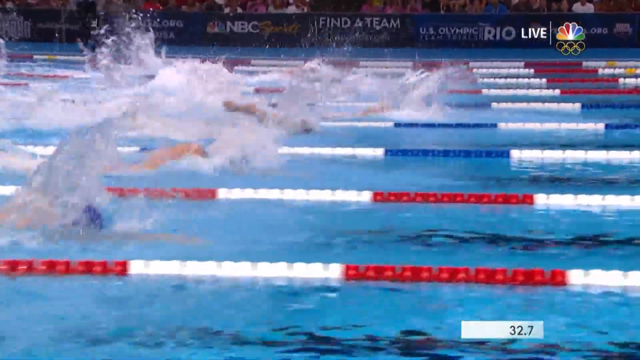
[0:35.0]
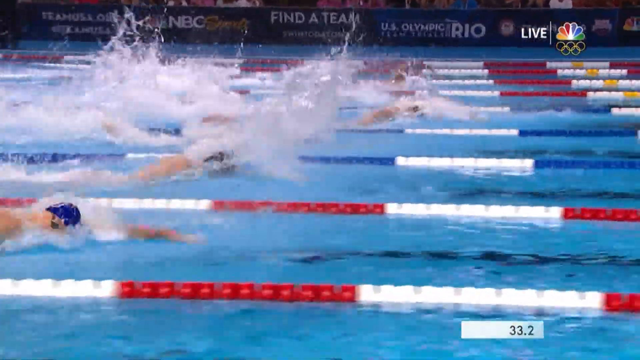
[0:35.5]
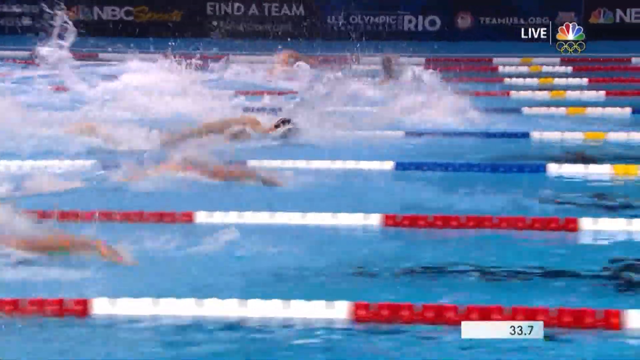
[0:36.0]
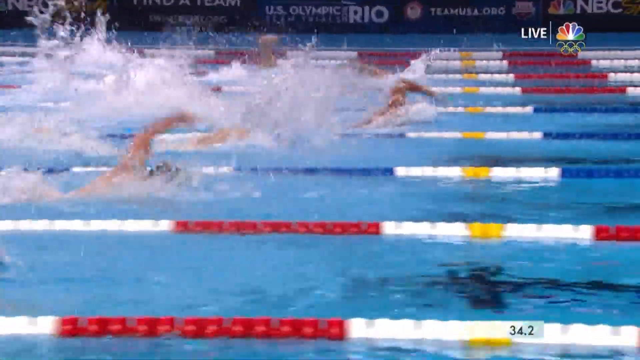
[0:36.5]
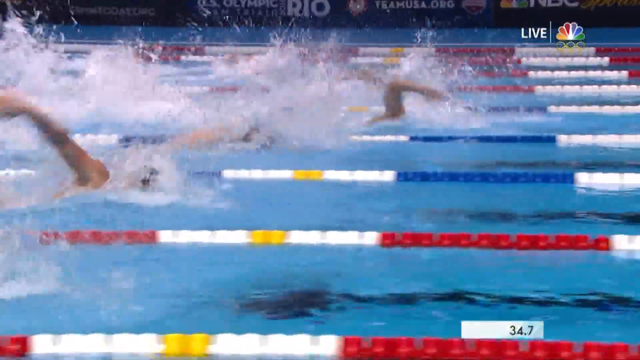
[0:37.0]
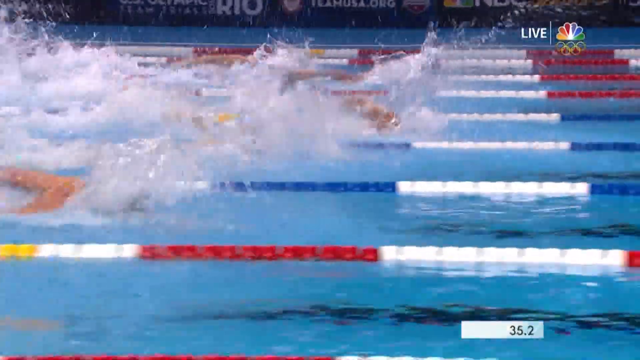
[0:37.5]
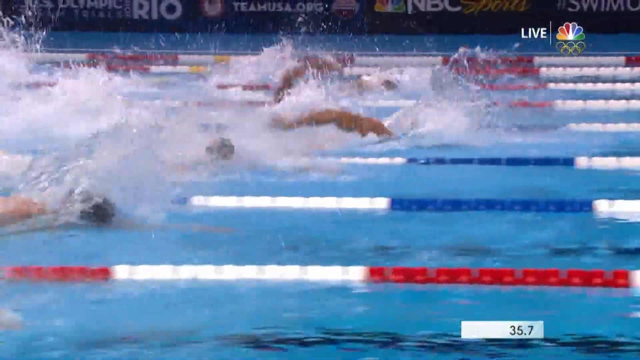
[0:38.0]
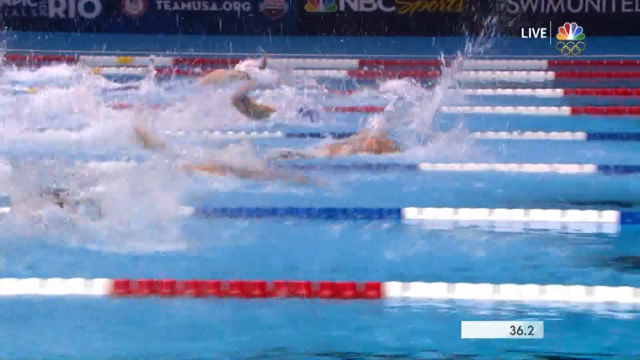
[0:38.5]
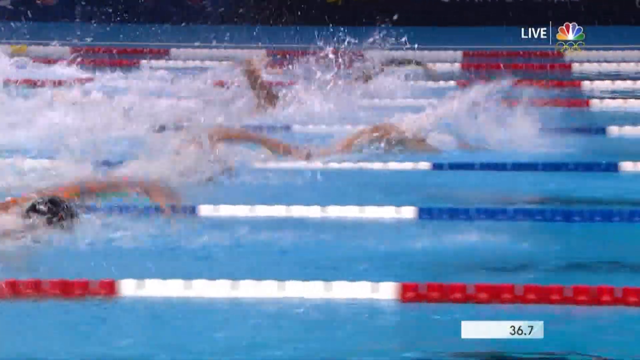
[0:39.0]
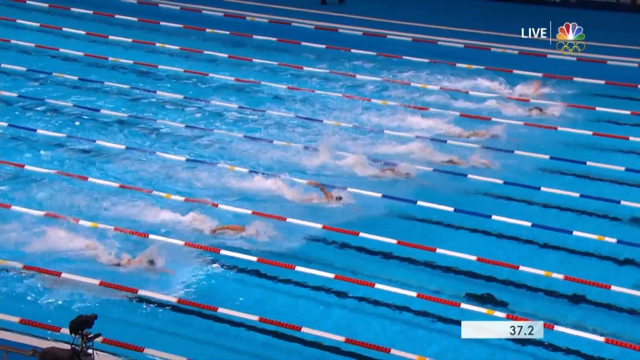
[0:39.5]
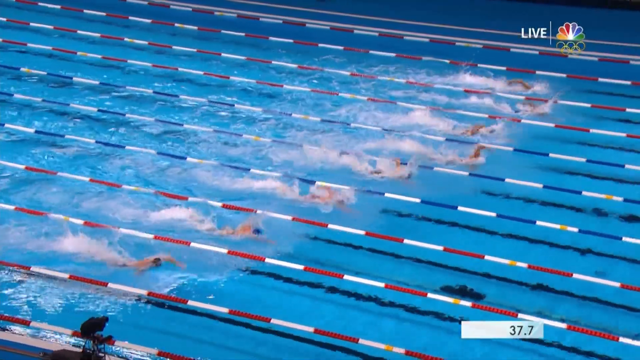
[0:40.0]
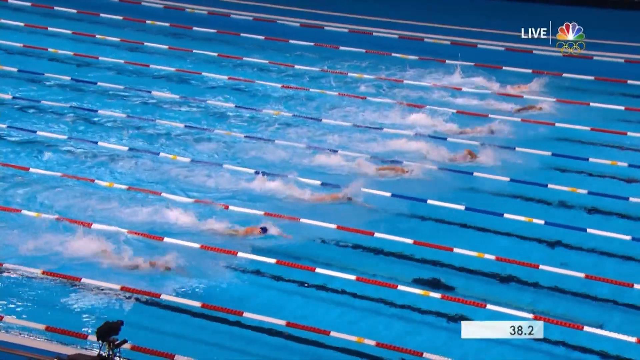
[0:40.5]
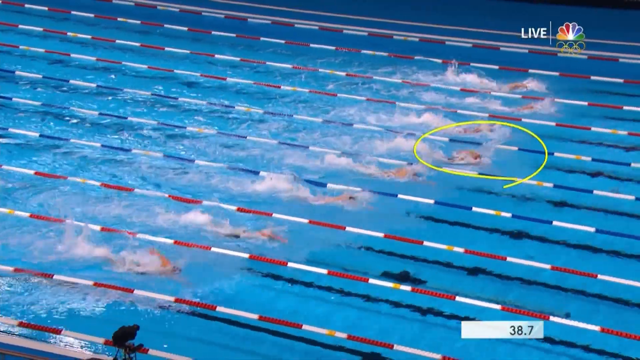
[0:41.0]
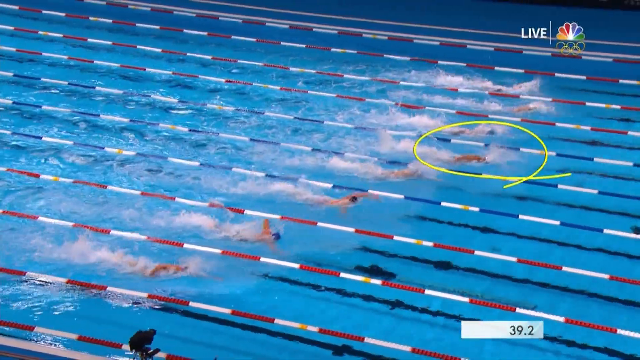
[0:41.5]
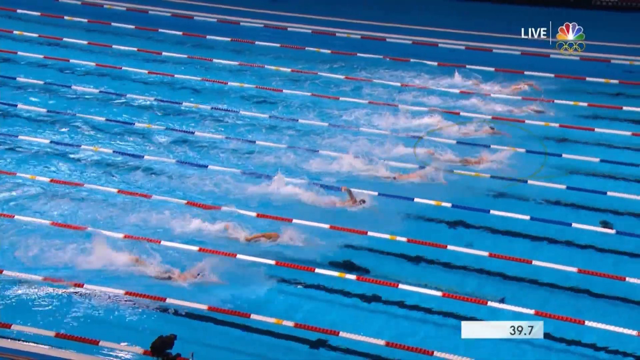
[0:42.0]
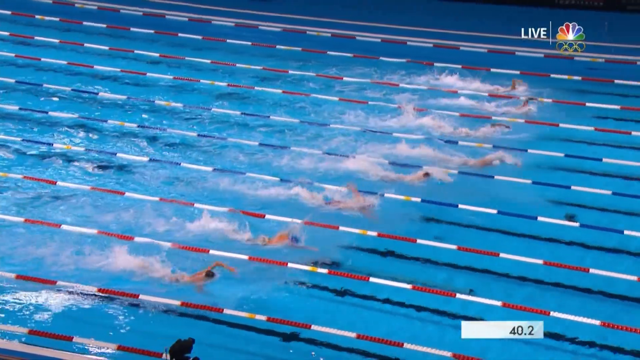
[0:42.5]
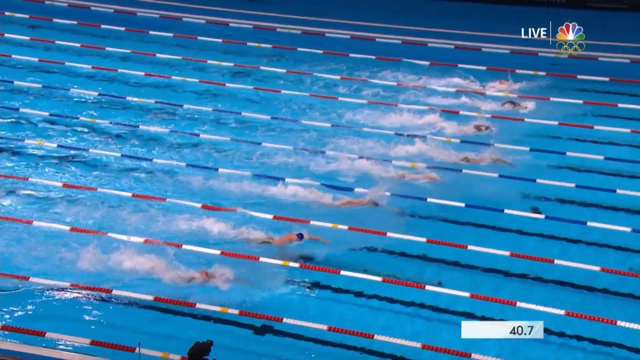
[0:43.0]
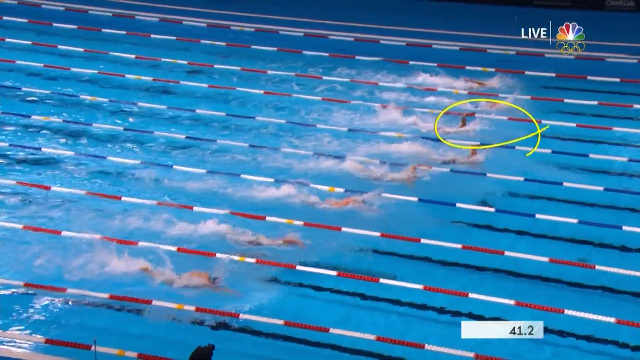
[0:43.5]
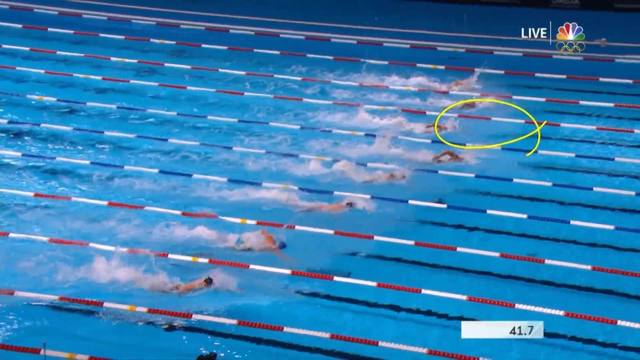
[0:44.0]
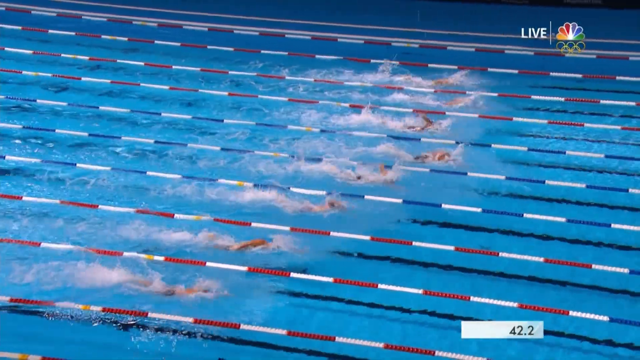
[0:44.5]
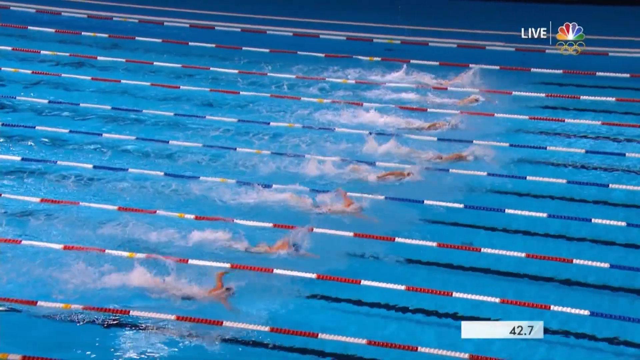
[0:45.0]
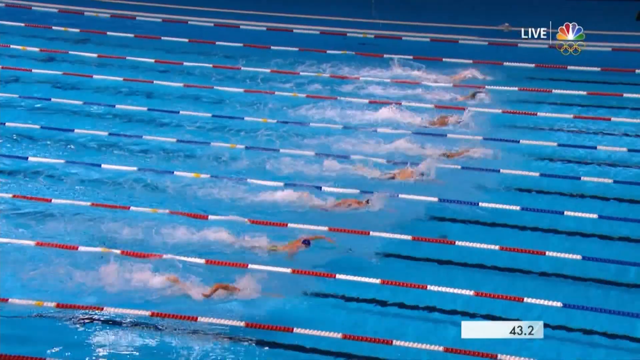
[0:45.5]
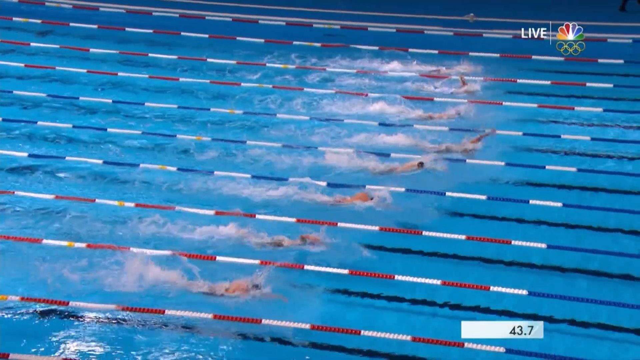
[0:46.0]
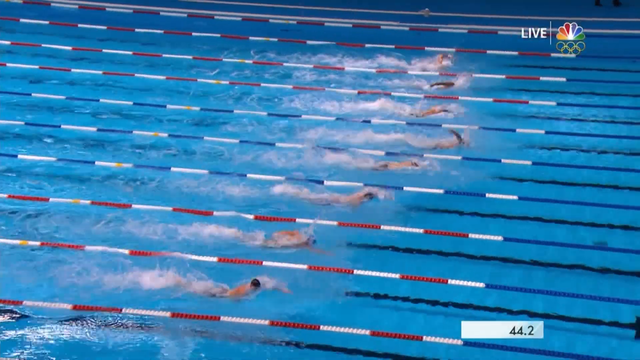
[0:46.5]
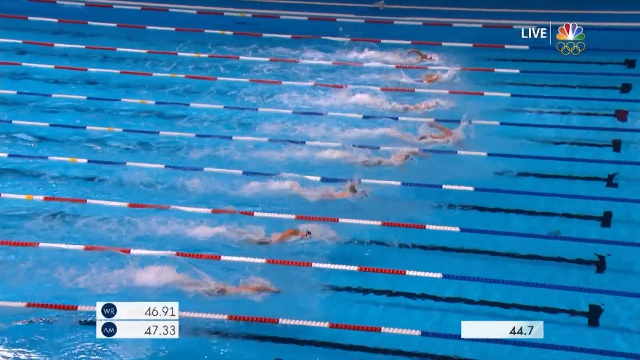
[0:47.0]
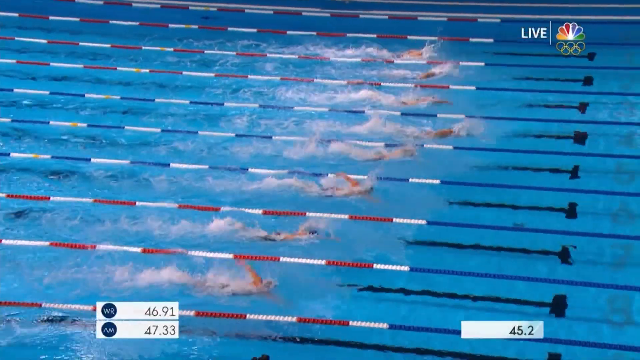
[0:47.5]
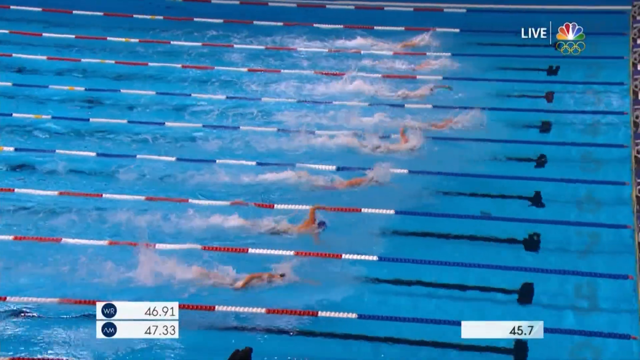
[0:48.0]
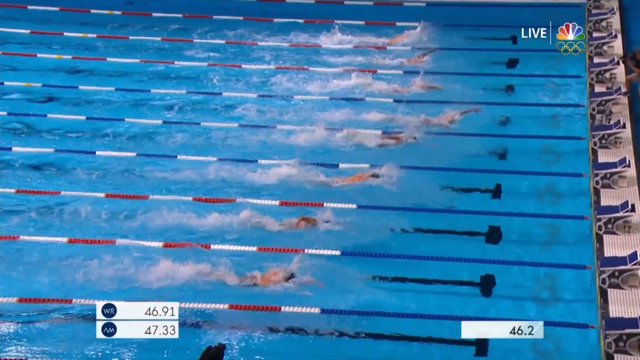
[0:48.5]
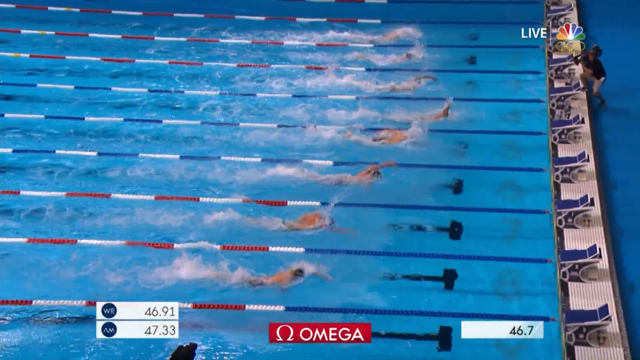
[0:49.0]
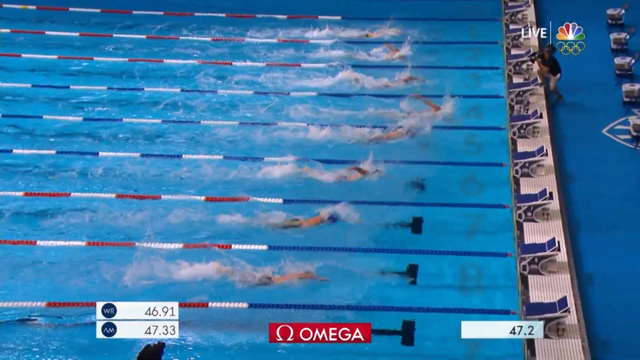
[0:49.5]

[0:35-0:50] A yellow circle highlights the swimmer who is ahead, in the 4th or 5th lane in the middle. It flashes as he begins to pull away even more from the other swimmers. His arms extend as he increases his pace, and he is well ahead of the remaining swimmers. A time clock rolls in the lower right corner of the screen, showing the time elapsing as the swimmers swim toward the other side of the pool. The swimmers continue, almost reaching the other side and the end of the race.